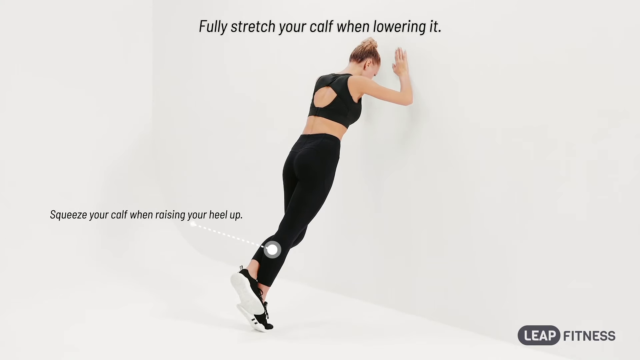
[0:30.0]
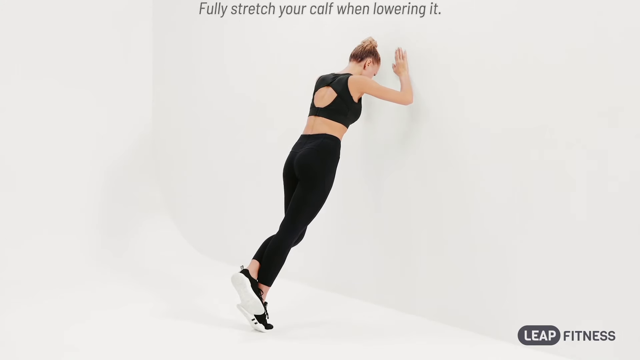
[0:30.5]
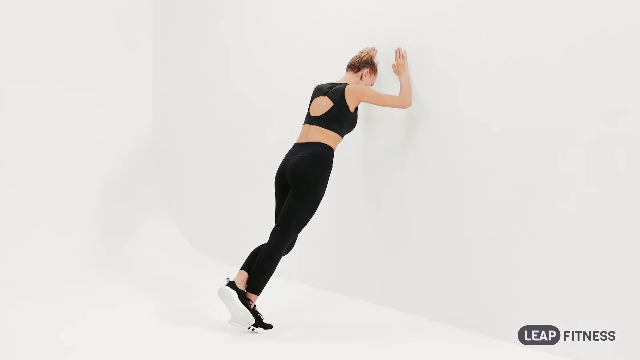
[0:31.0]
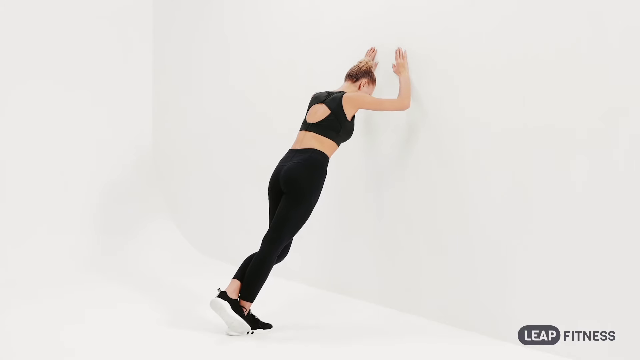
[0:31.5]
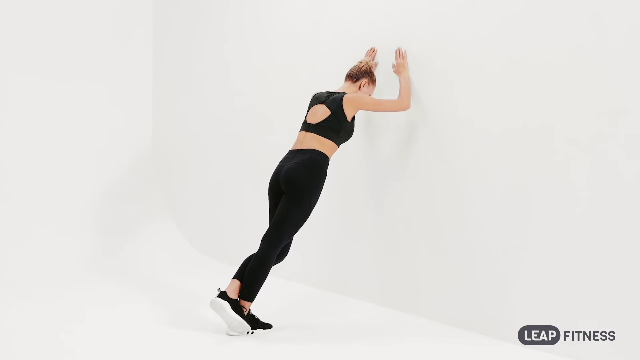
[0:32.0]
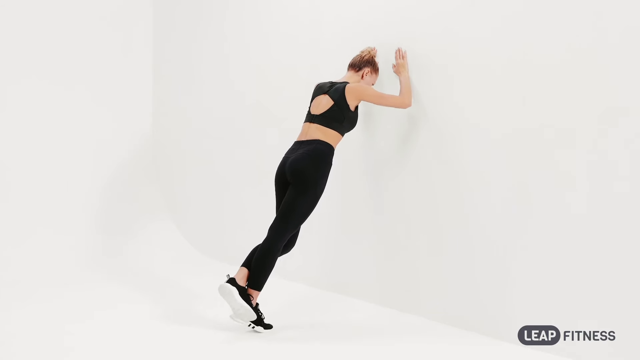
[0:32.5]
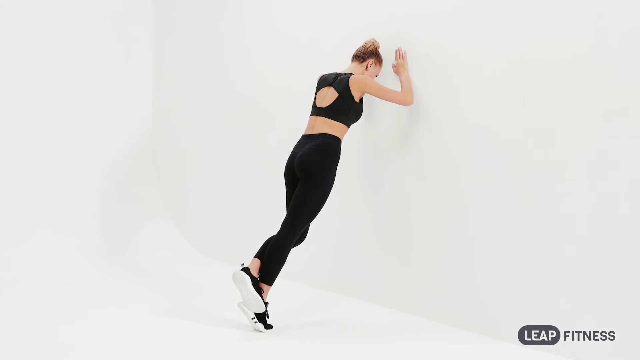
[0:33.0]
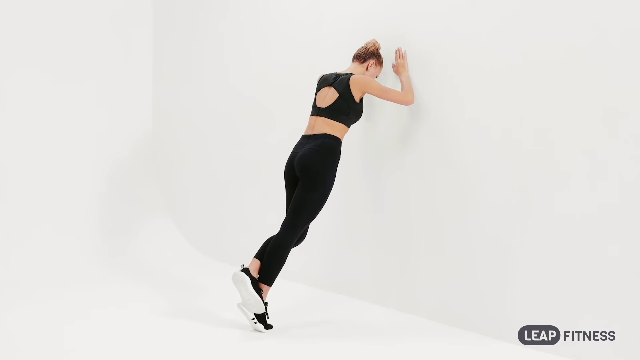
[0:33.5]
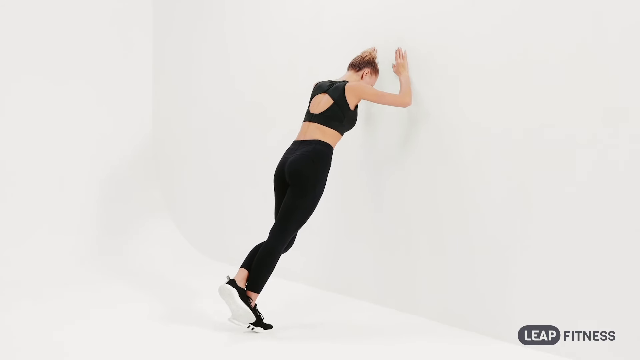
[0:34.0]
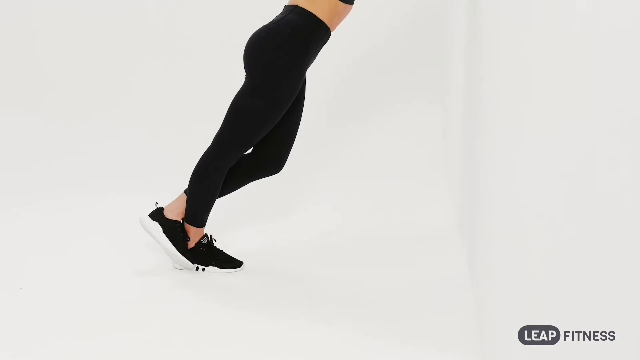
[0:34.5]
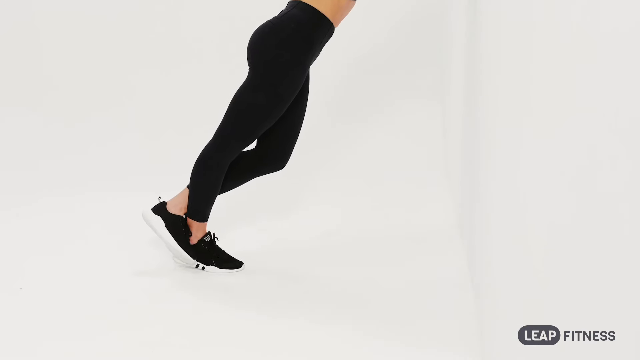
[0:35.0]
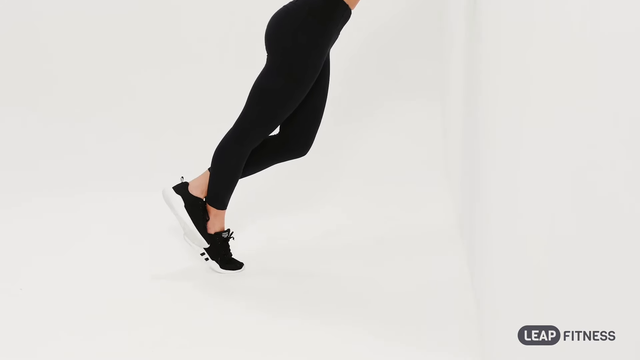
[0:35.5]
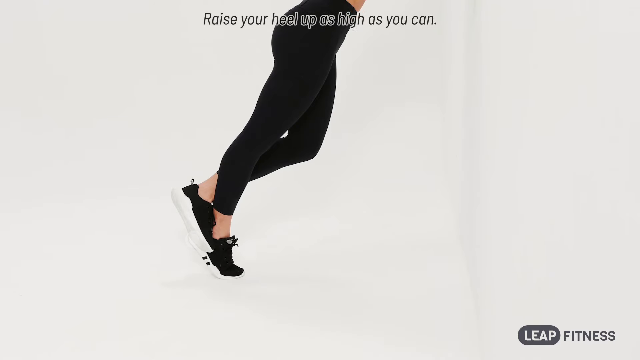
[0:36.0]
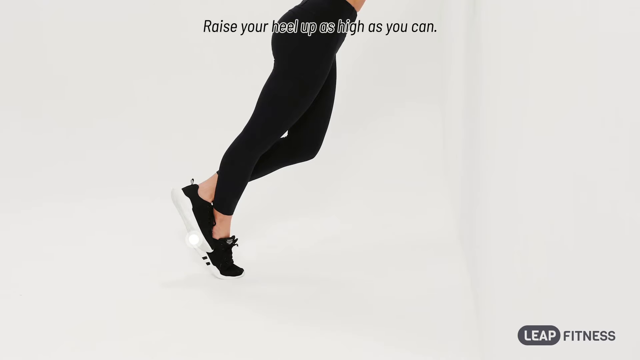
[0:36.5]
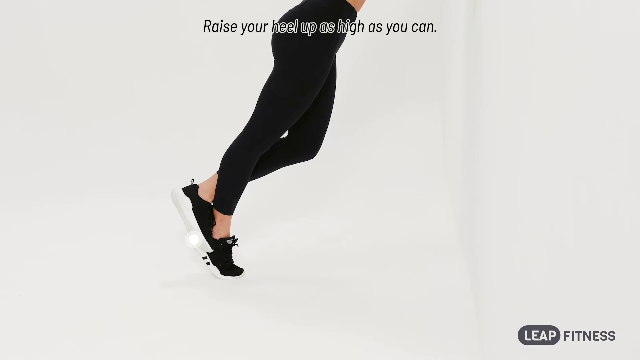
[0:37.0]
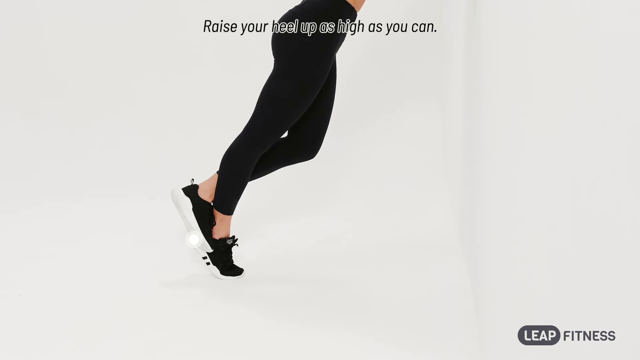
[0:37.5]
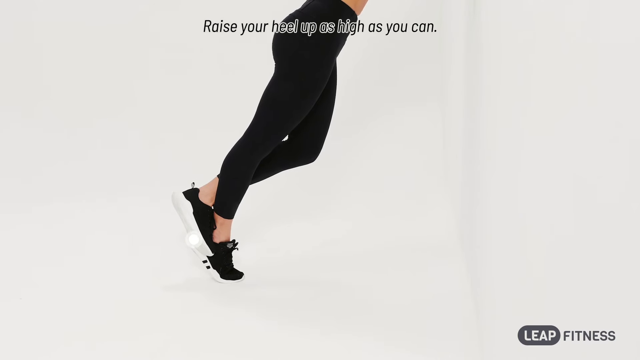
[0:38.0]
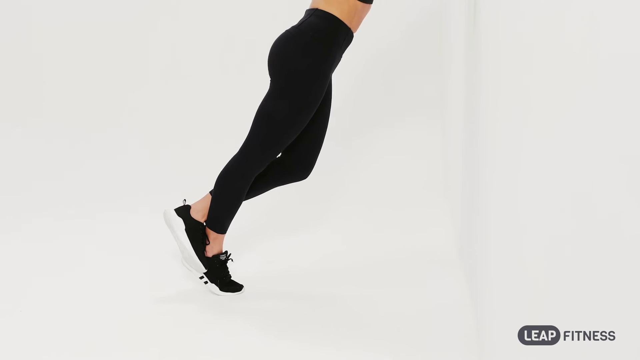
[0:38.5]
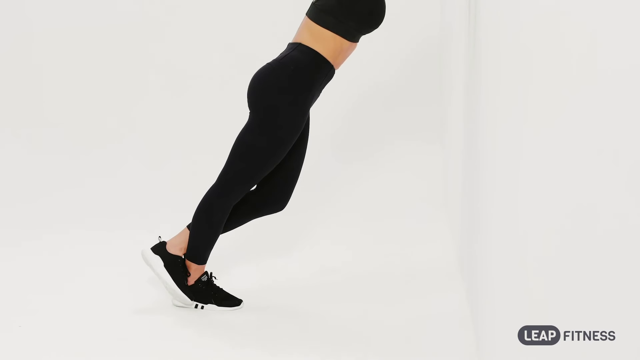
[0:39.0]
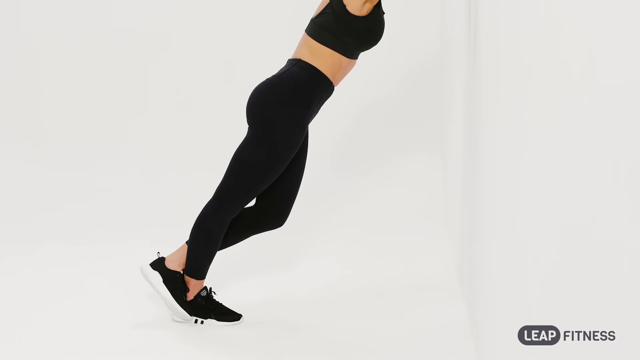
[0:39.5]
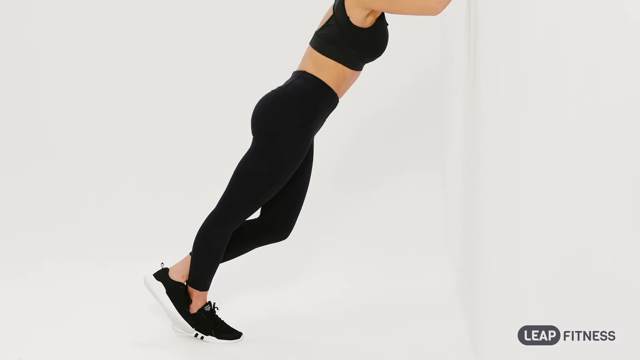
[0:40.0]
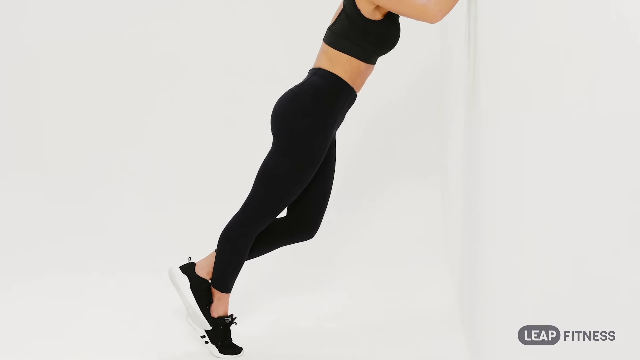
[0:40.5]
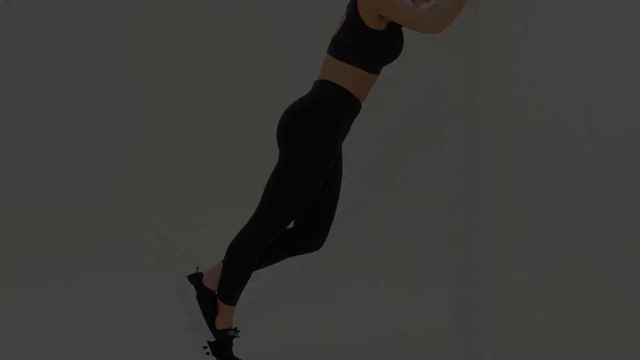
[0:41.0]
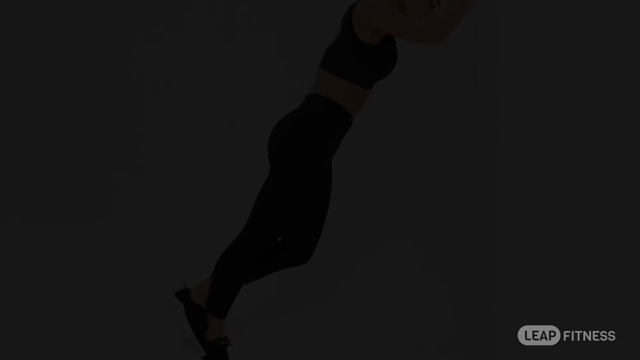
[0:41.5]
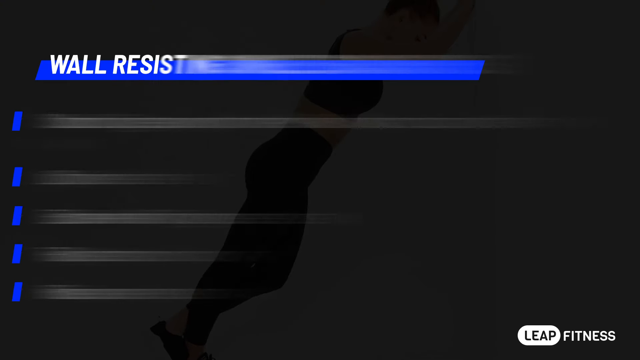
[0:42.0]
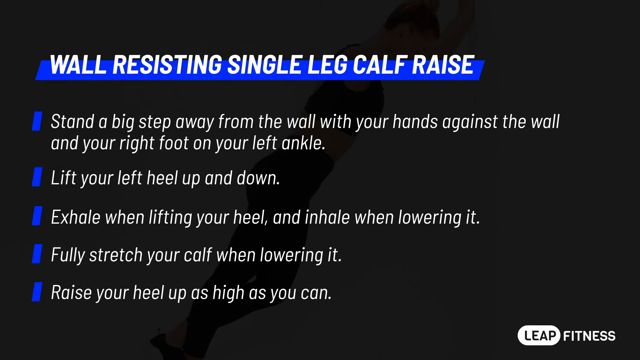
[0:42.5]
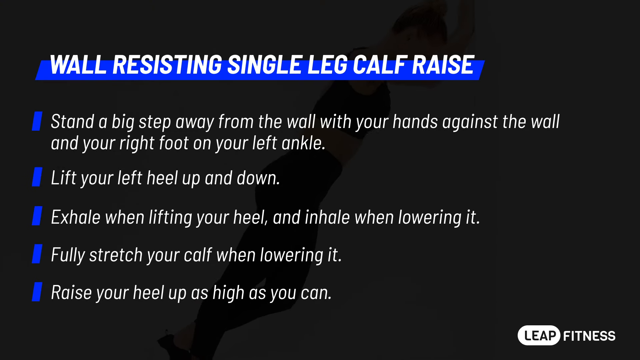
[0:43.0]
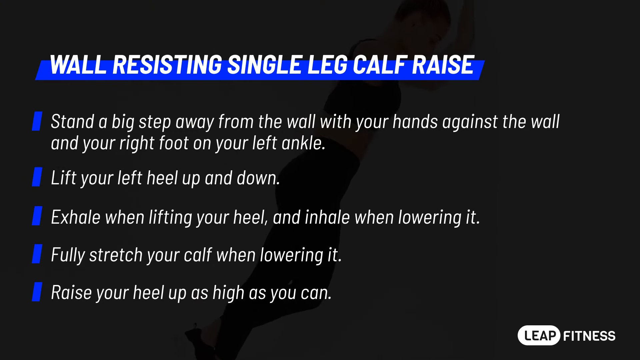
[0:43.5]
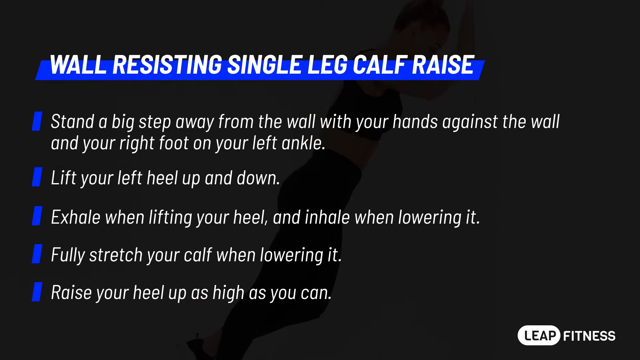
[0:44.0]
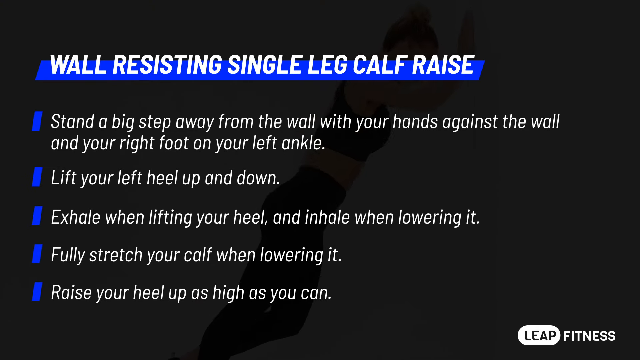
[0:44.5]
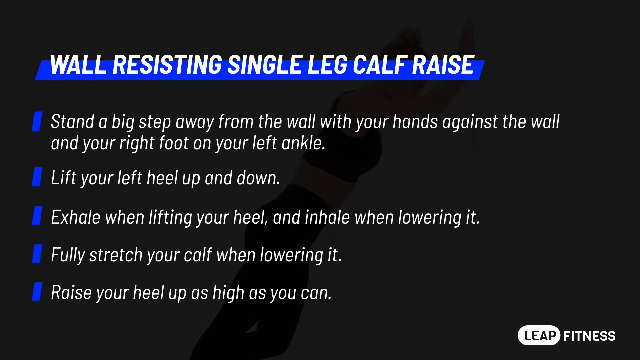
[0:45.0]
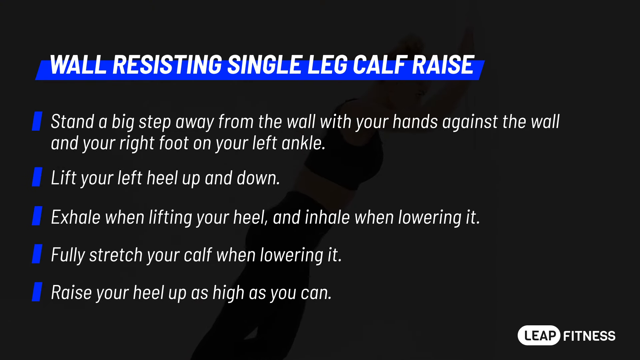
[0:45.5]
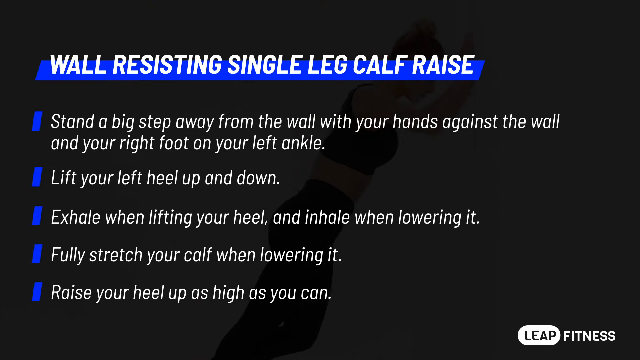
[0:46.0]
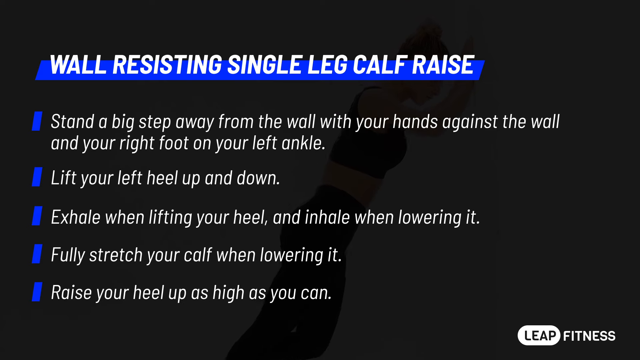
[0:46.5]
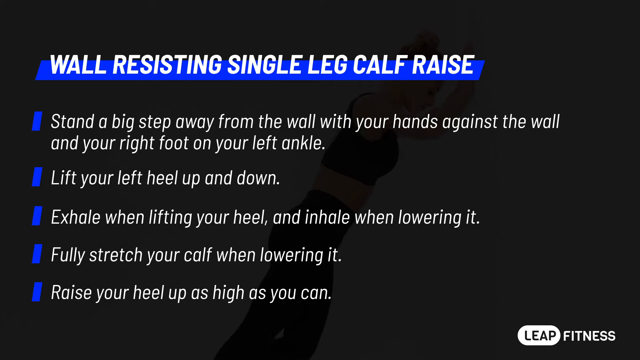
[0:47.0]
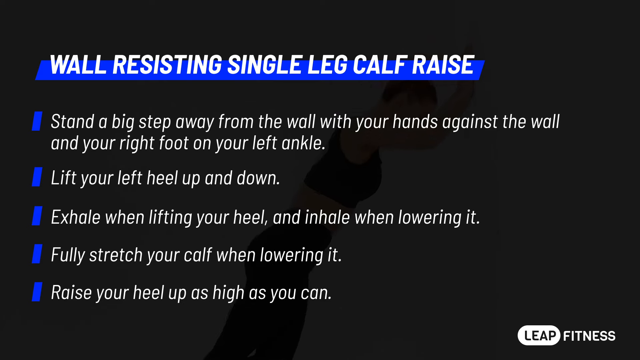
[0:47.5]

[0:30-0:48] Text on the screen reads "fully stretch your calf when lowering it," and over on the left, text reads "squeeze your calf when raising your heel up." The person raises their heel off the ground to stand on the tiptoe of one foot, so their body slowly moves up into the air, then slowly lowers the foot back down to stand flat-footed as their body moves back toward the floor. The video ends on a final text screen titled "wall resisting single leg calf raise" with five small blue bullet points walking through the exercise: "stand a big step away from the wall with your hands against the wall and your right foot on your left ankle," "lift your left heel up and down," "exhale while lifting your heel and inhale when lowering it," "fully stretch your calf when lowering it," and "raise your heel up as high as you can."